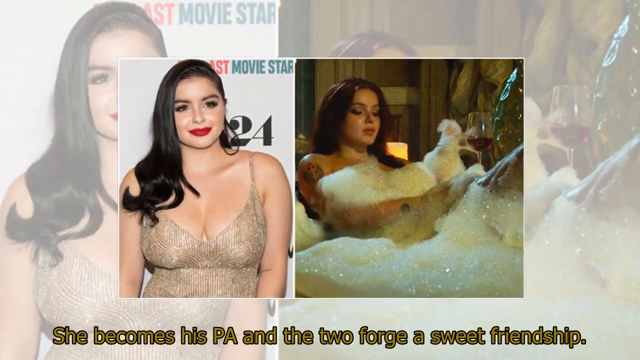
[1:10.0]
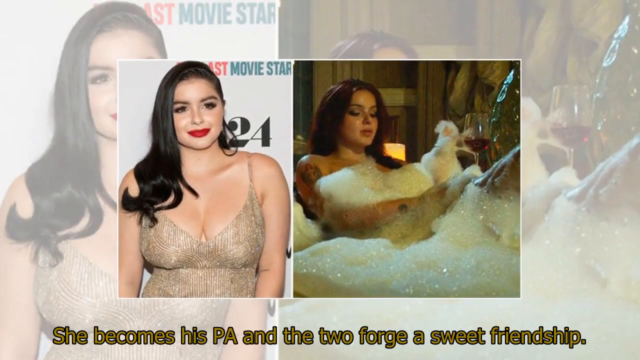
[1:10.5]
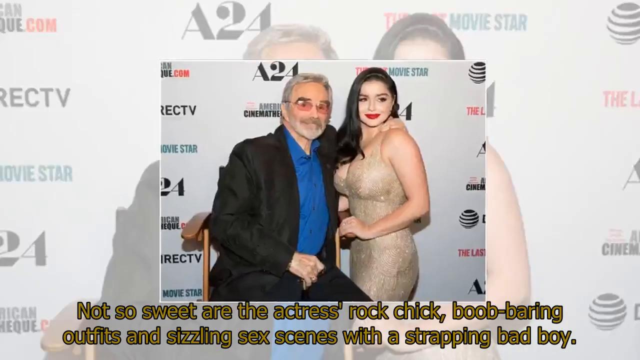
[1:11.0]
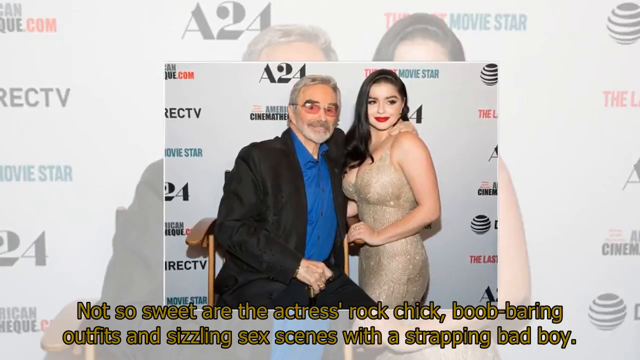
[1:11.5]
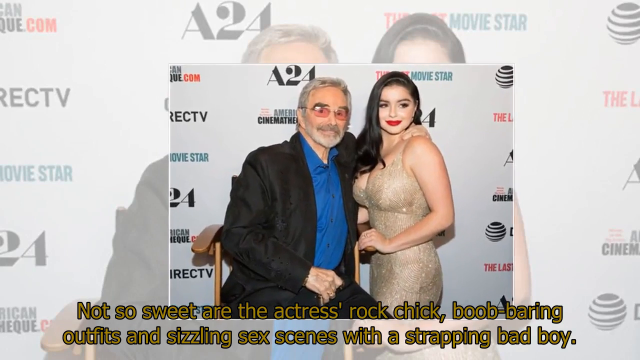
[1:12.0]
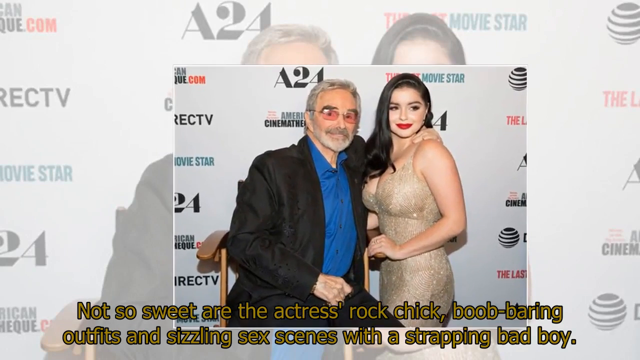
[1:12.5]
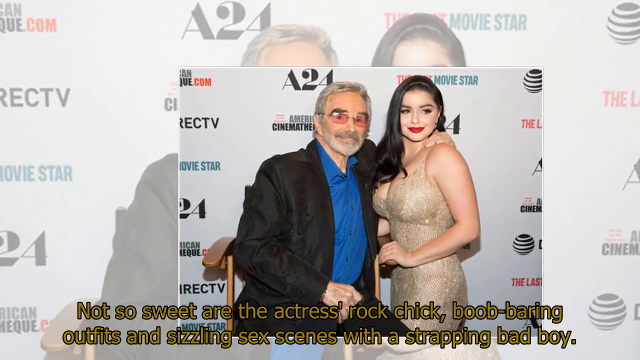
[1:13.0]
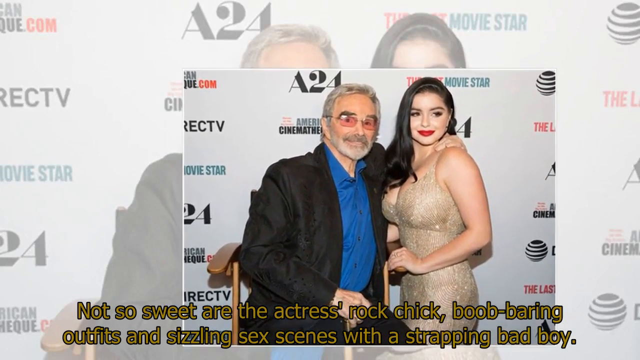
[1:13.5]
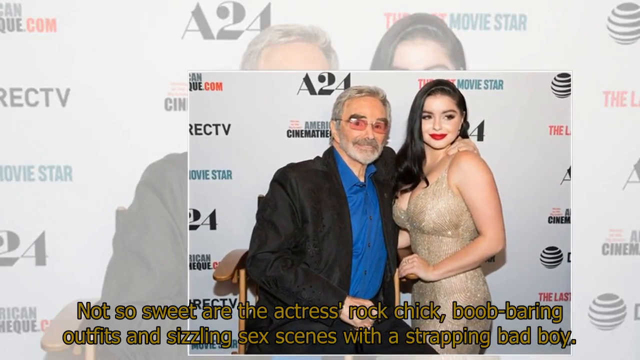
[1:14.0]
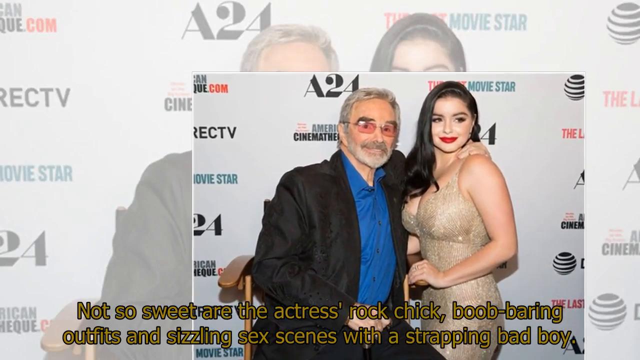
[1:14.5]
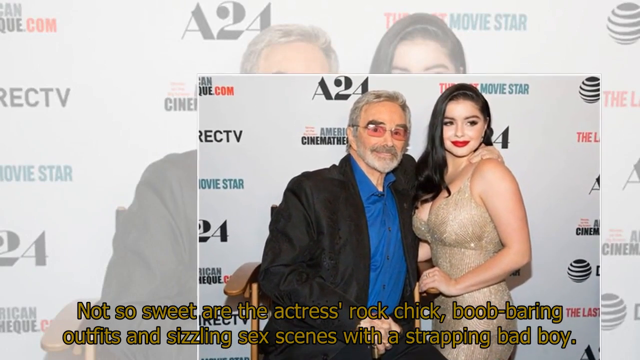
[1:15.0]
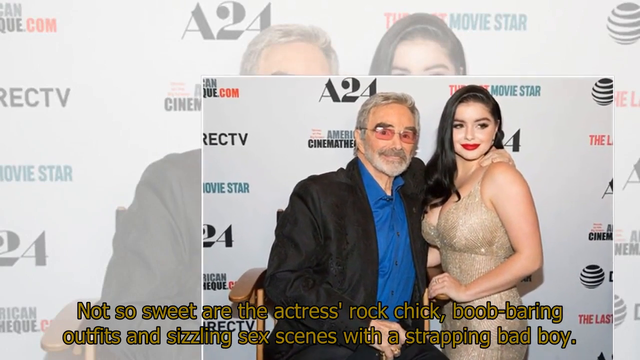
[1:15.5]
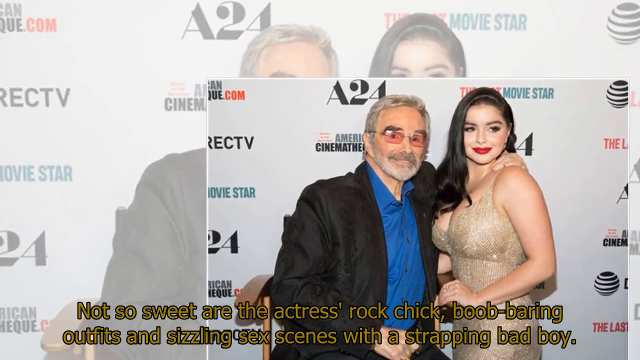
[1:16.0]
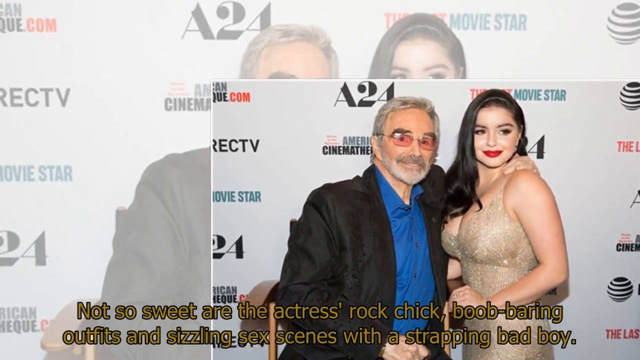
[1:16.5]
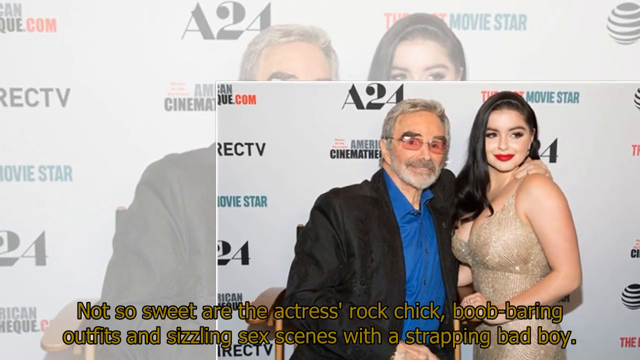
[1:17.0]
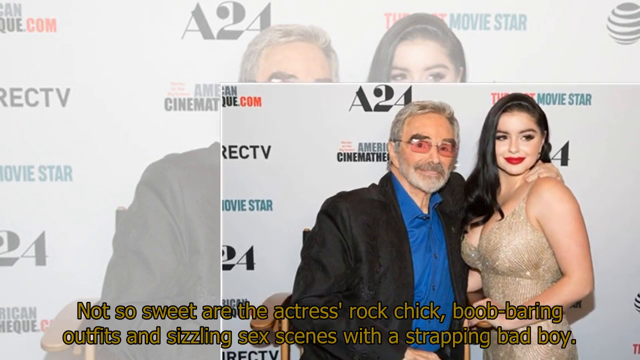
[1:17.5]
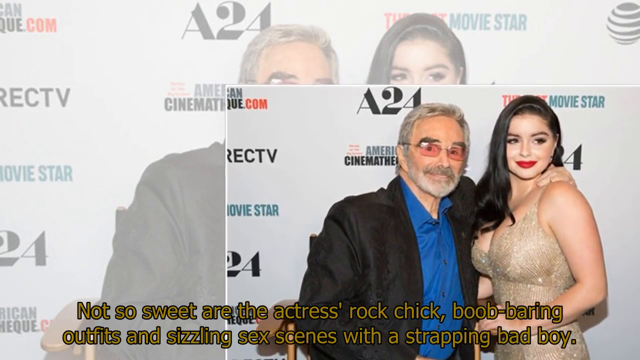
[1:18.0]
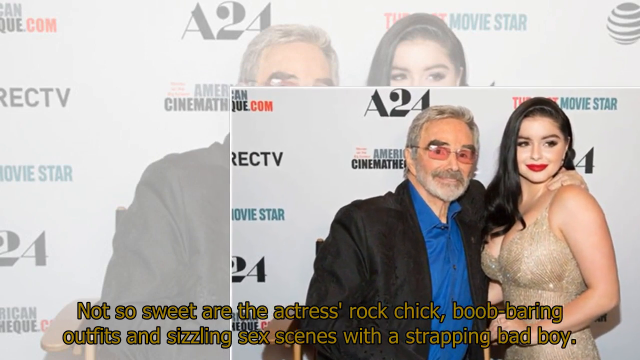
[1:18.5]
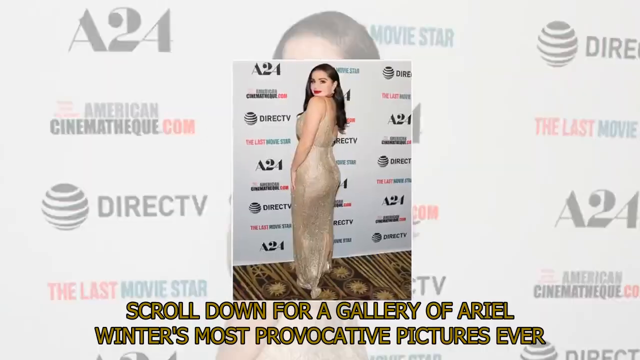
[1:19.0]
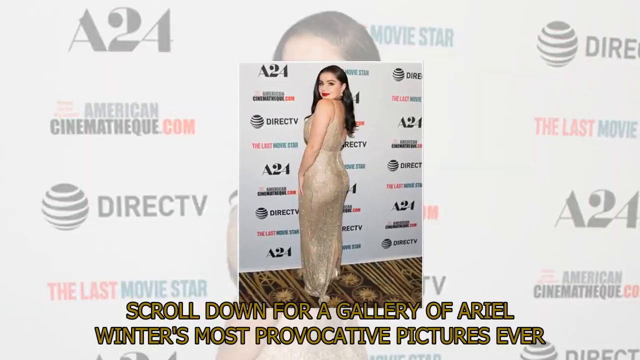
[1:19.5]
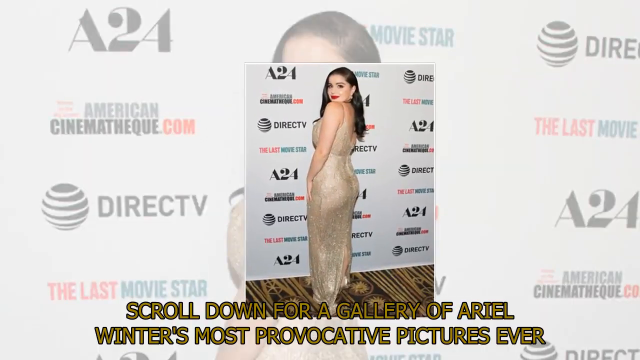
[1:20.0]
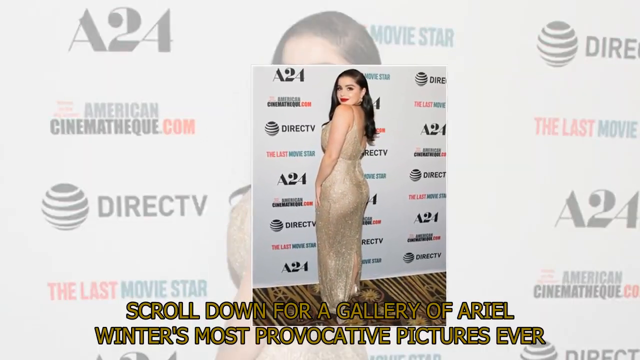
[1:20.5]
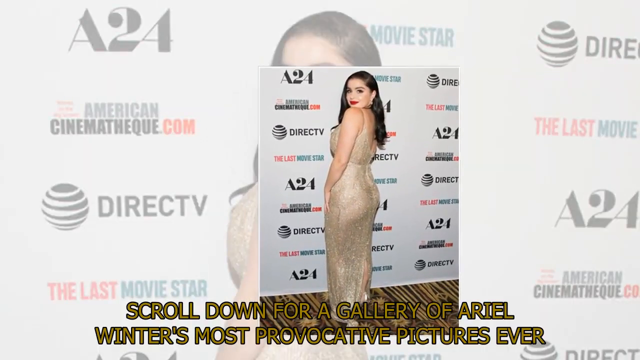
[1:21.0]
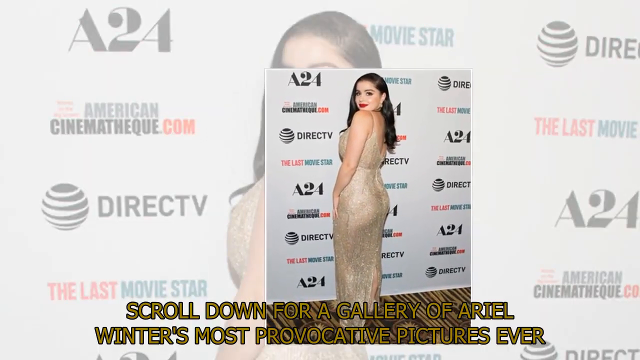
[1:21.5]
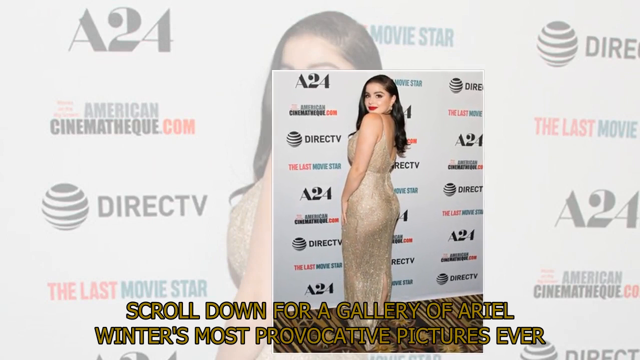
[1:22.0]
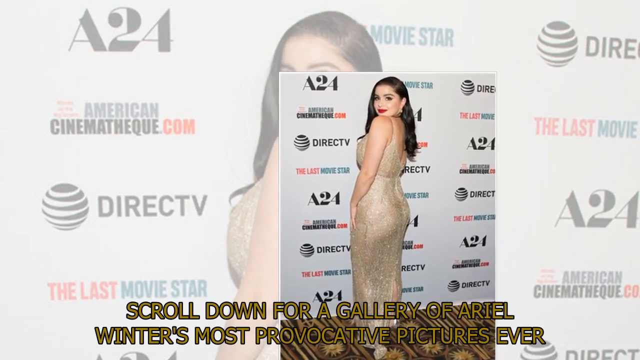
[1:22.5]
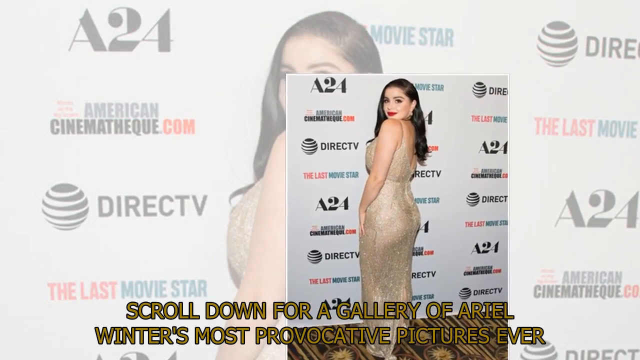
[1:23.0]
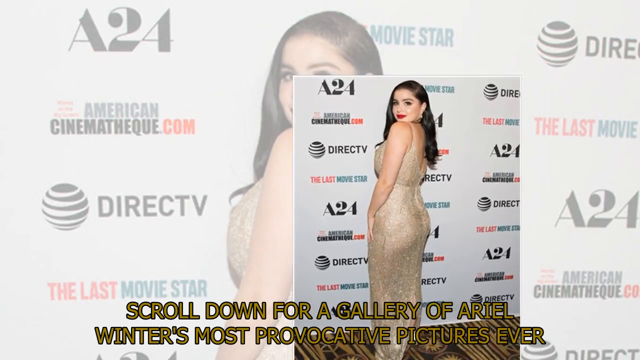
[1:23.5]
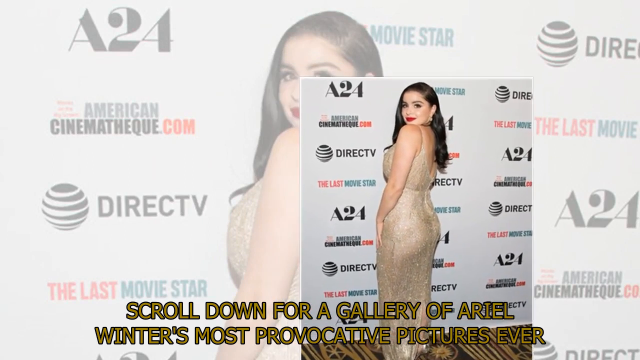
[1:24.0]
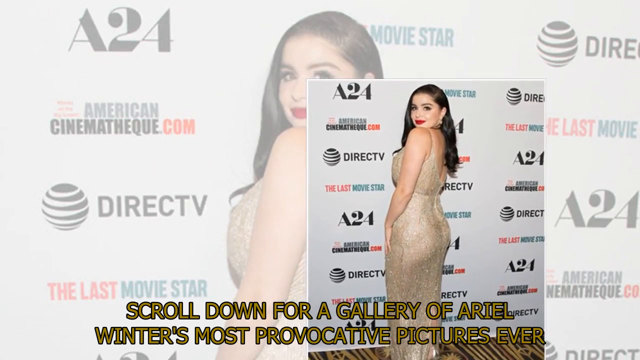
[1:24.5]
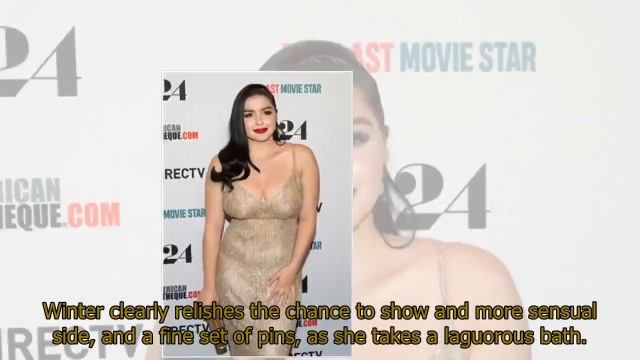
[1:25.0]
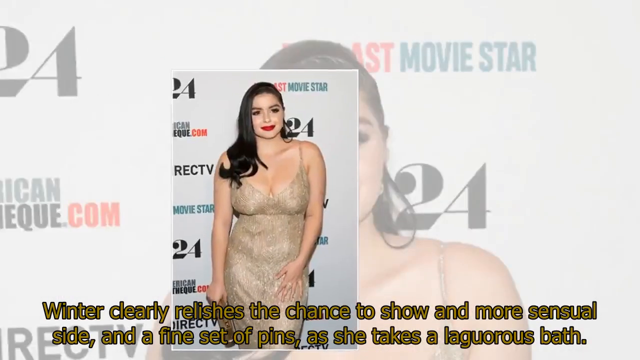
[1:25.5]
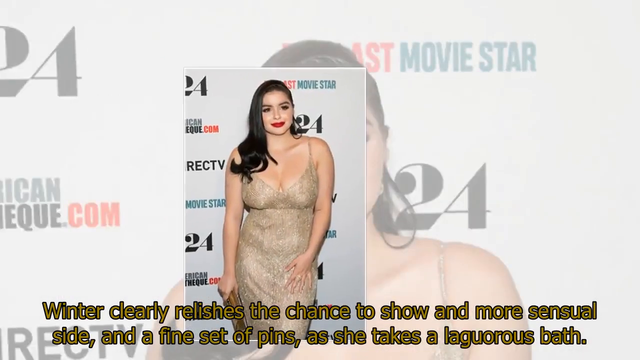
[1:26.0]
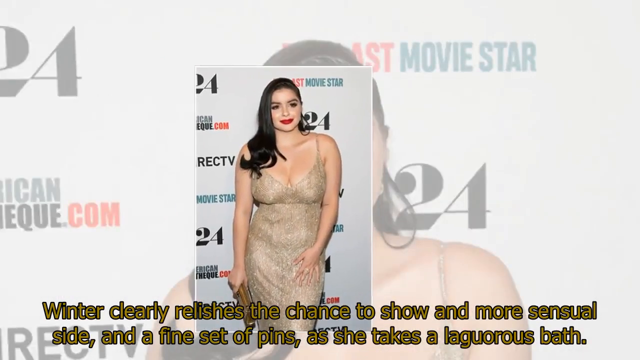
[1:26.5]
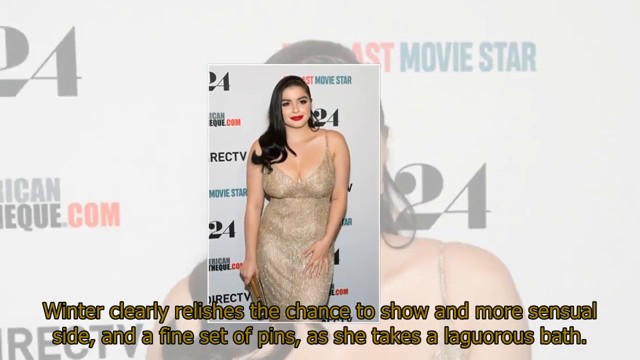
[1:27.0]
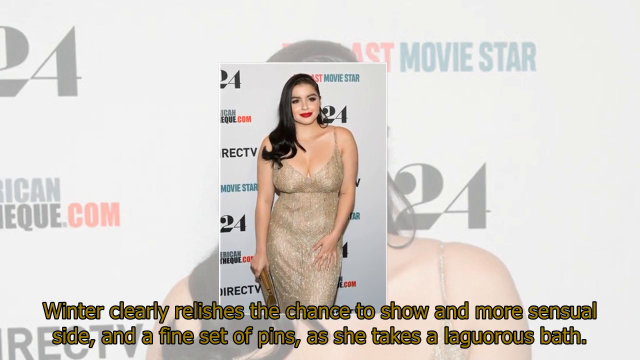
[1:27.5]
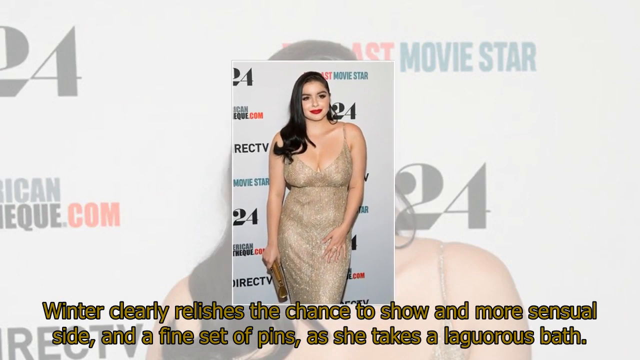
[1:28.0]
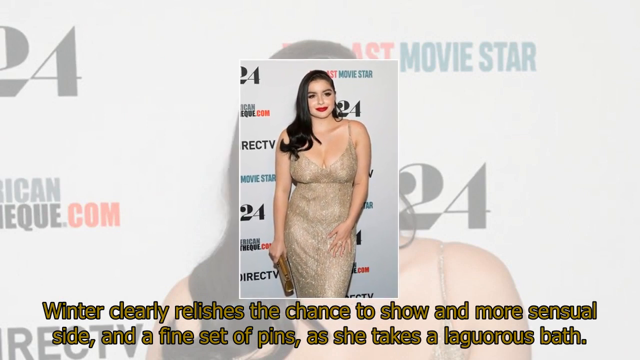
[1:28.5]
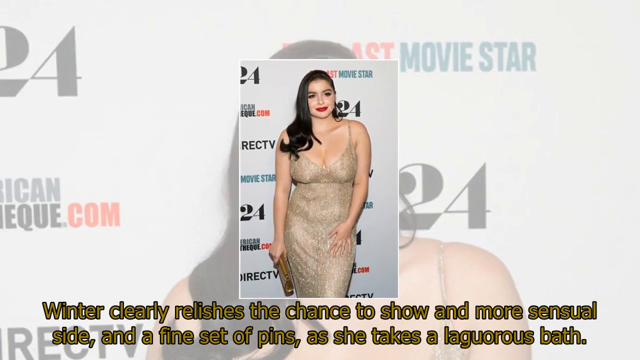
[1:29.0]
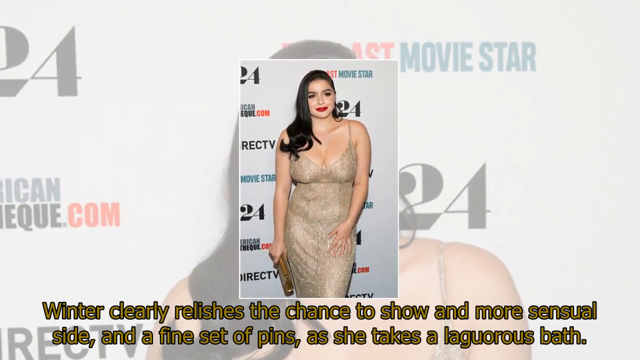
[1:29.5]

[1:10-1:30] Text gives more information about the actress, saying that viewers can scroll down for a gallery of Ariel Winter's most provocative photos, in which she wears revealing outfits. Her photo alone and the photo of her with the old man are shown.